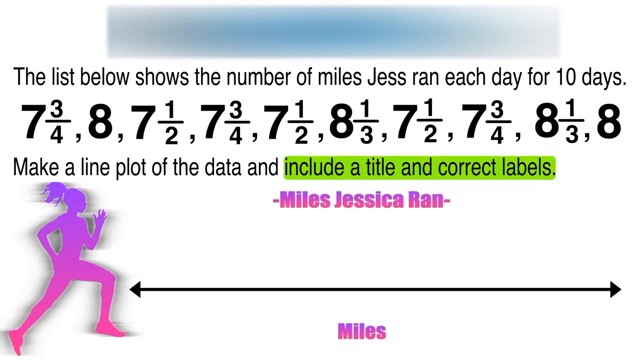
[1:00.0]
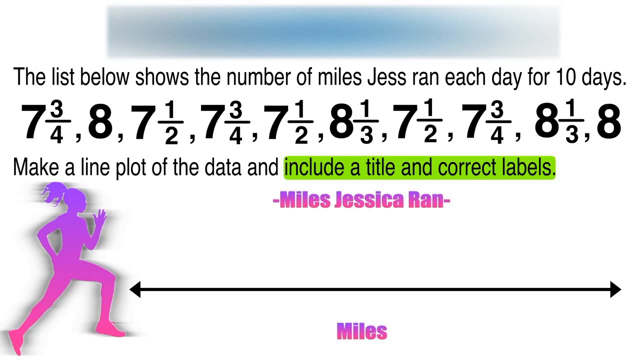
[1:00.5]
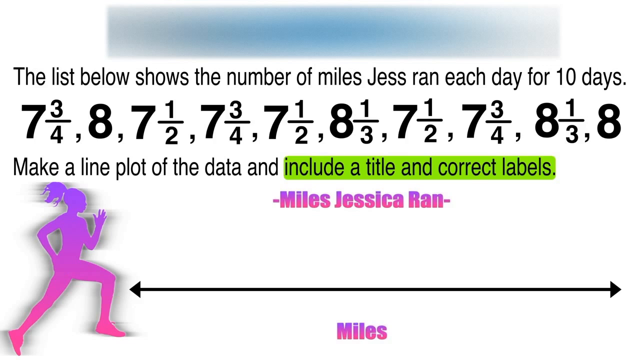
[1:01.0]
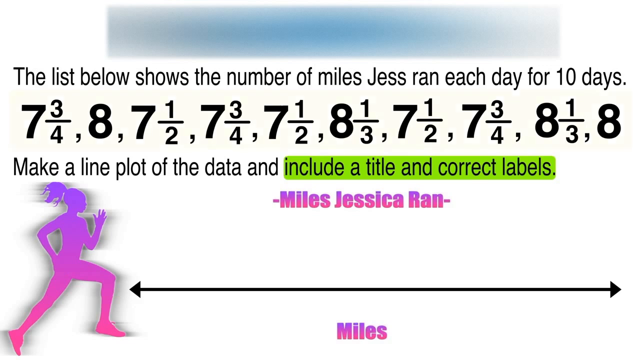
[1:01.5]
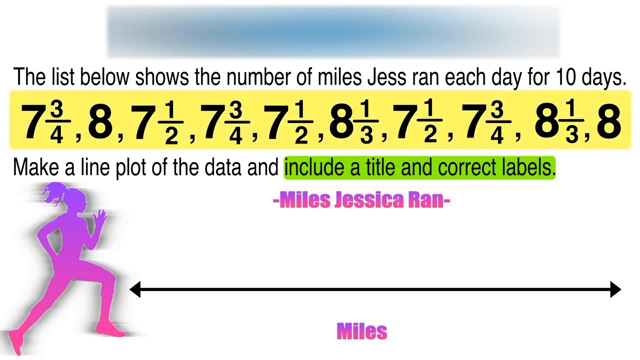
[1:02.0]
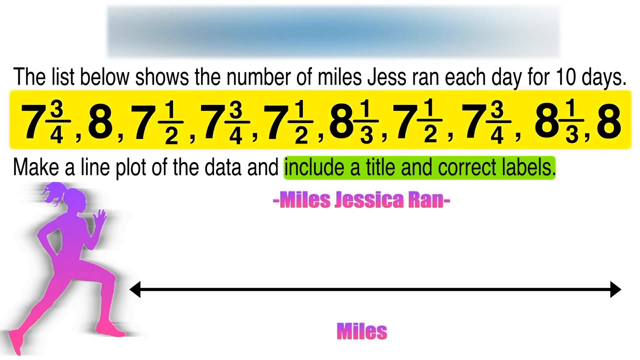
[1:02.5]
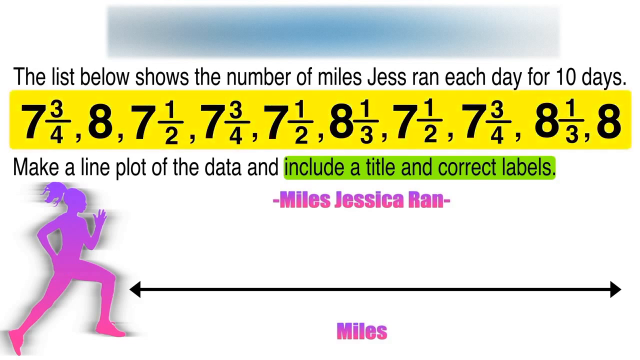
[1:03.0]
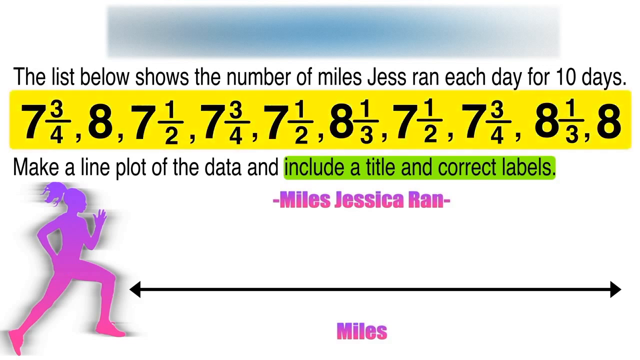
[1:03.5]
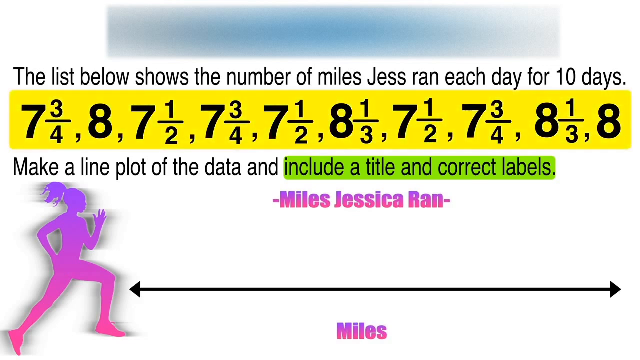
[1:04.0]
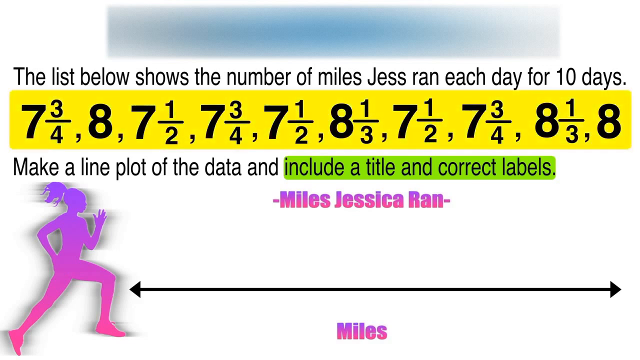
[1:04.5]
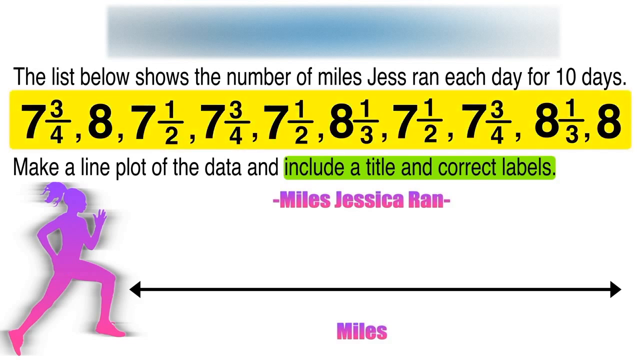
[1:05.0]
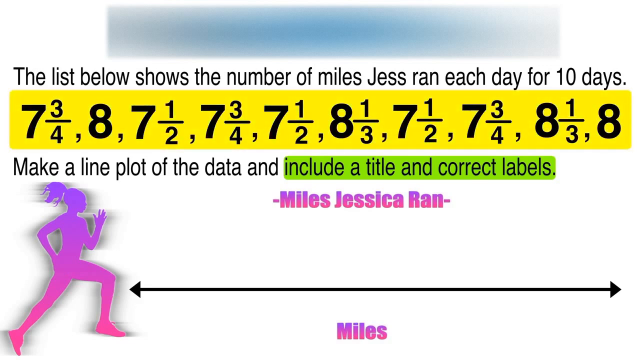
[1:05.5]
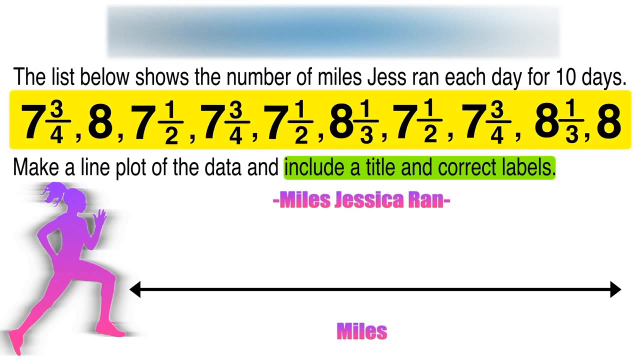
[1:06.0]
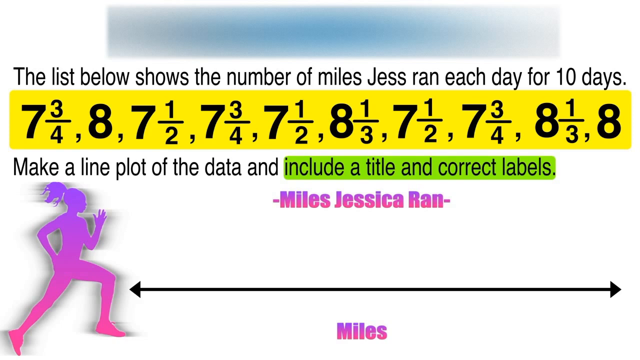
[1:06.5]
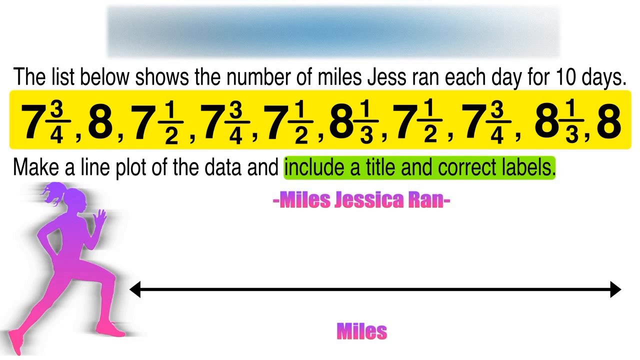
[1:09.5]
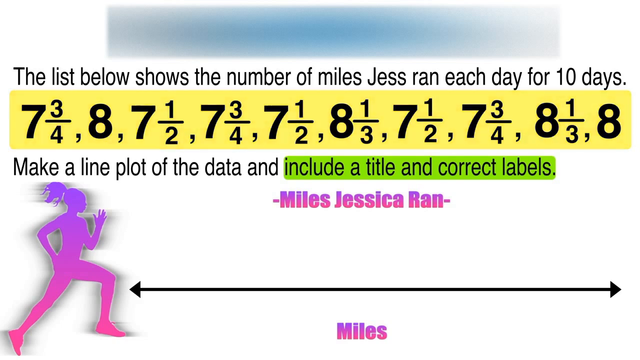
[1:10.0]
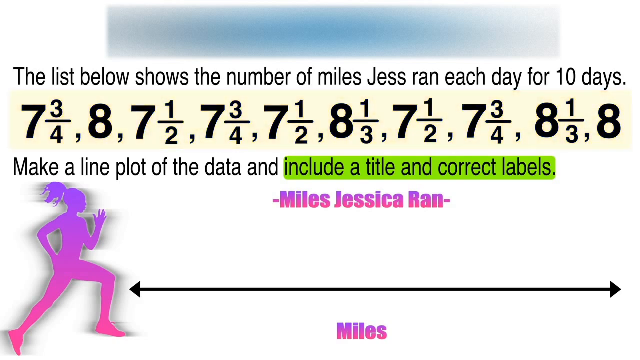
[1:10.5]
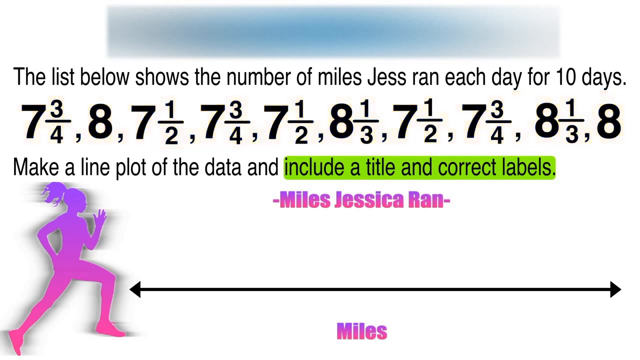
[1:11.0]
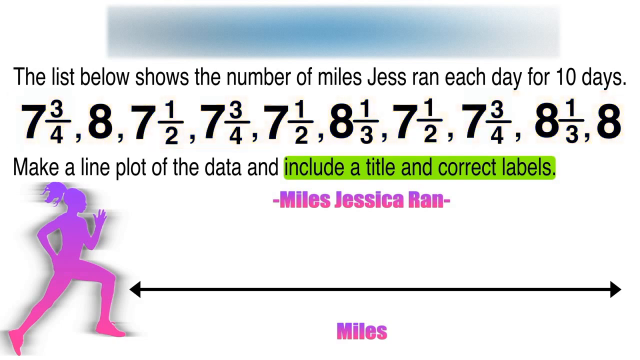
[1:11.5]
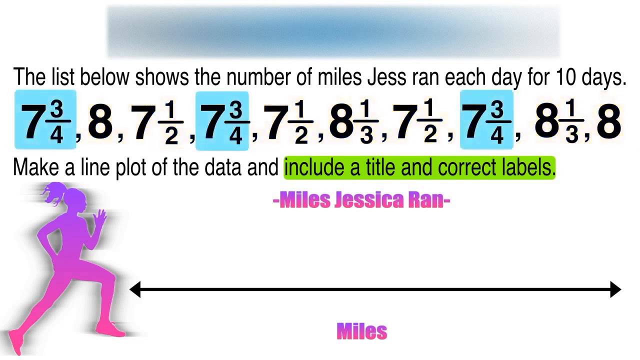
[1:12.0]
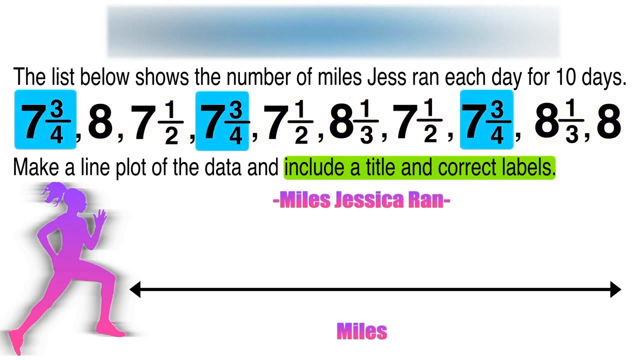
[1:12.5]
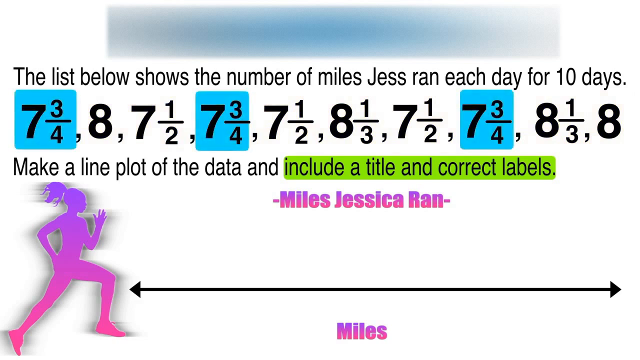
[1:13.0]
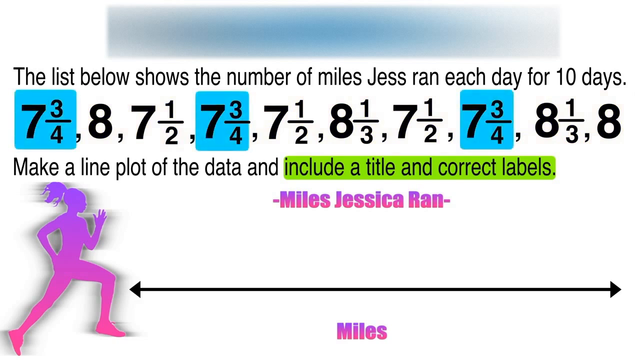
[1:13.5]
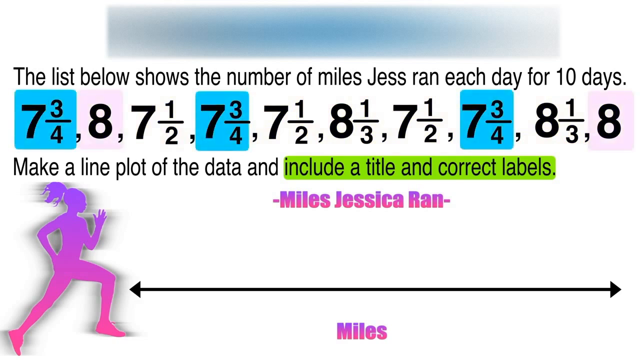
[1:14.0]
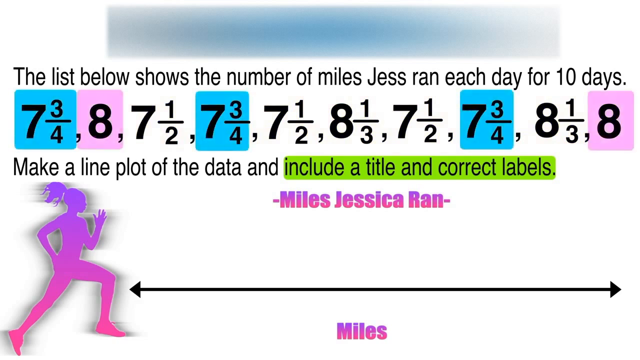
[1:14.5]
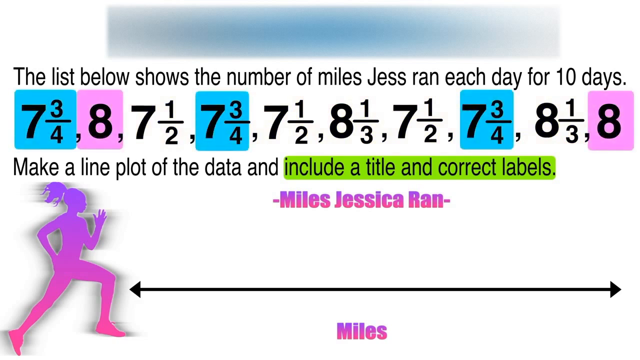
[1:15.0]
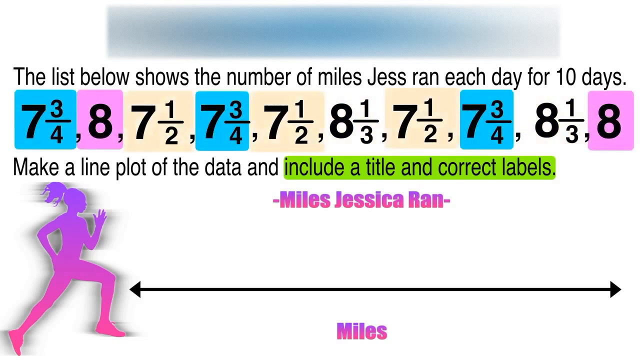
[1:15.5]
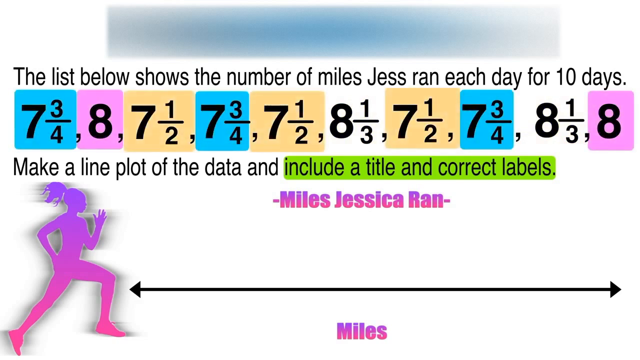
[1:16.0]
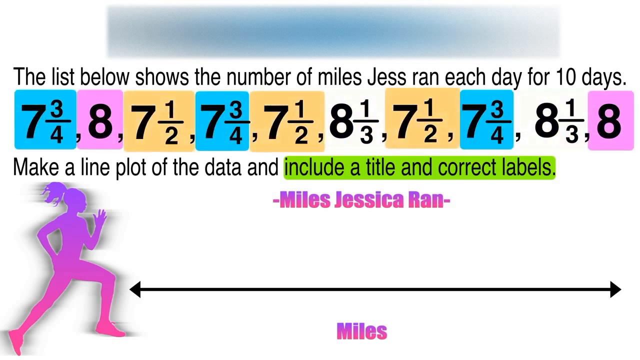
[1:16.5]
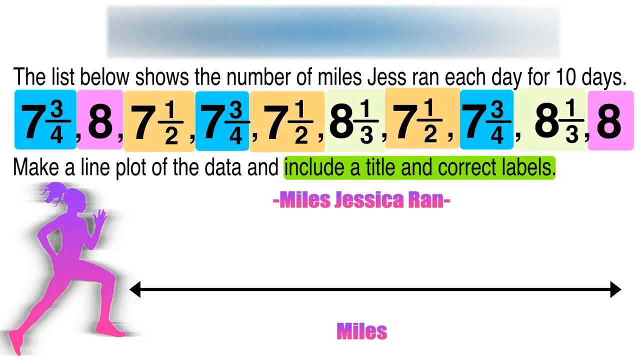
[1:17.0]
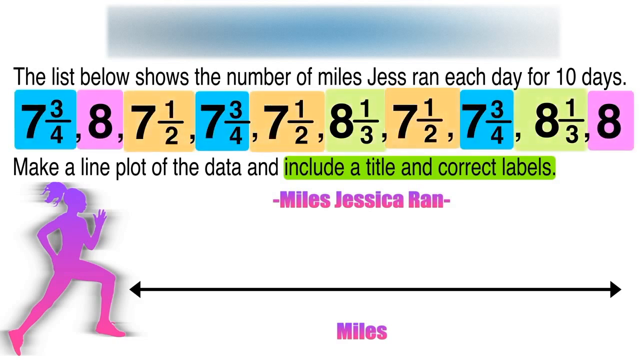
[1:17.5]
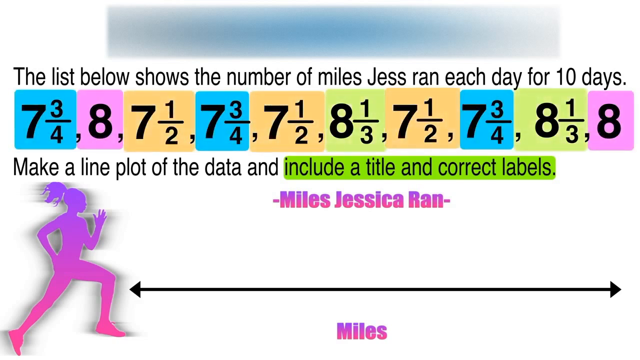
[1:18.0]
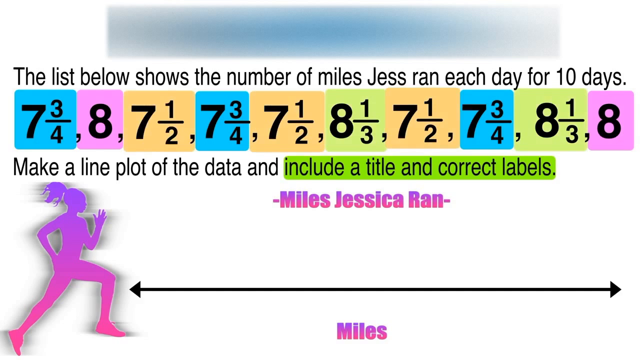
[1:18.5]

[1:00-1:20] Above the number line is the text "Miles Jessica Ran," and below it is the word "Miles" in the same purple-pink color. The whole line of fractions from the question is then highlighted in yellow and stays like that for about five seconds. Next, only some numbers on that line are highlighted: the three instances of 7 3/4 turn blue, the two 8s are highlighted in pink, the 7 1/2s are highlighted in orange, and the 8 1/3s are highlighted in green. The numbers in the question are now multicolored in blue, pink, orange, or green depending on their value.